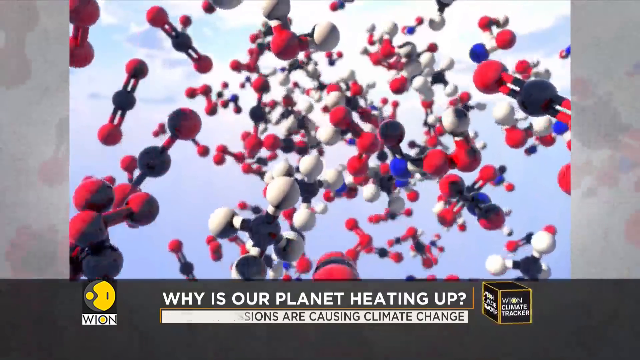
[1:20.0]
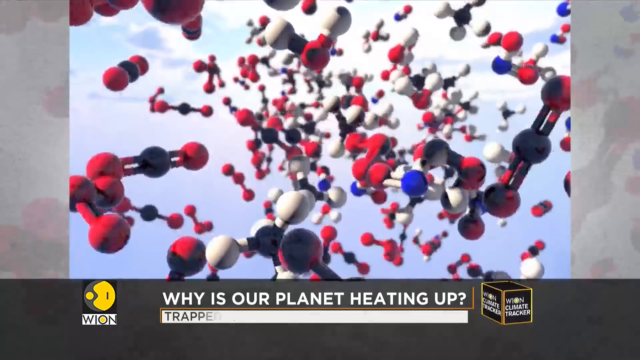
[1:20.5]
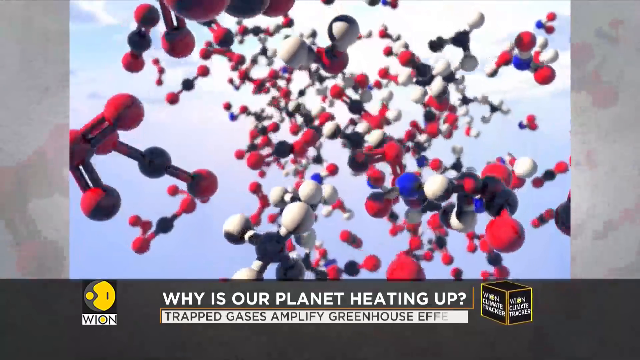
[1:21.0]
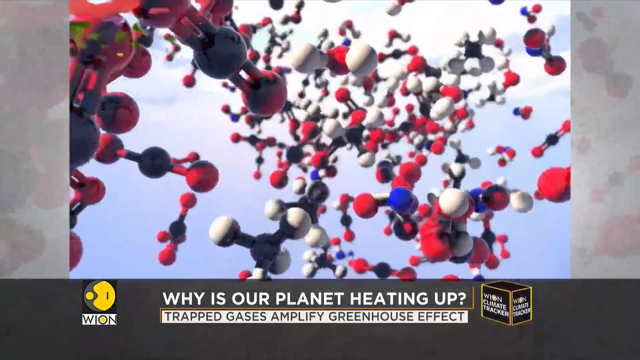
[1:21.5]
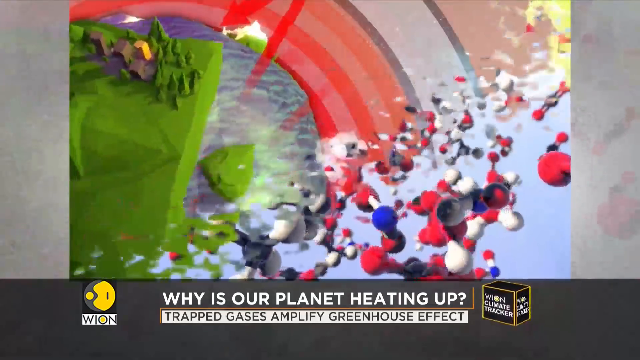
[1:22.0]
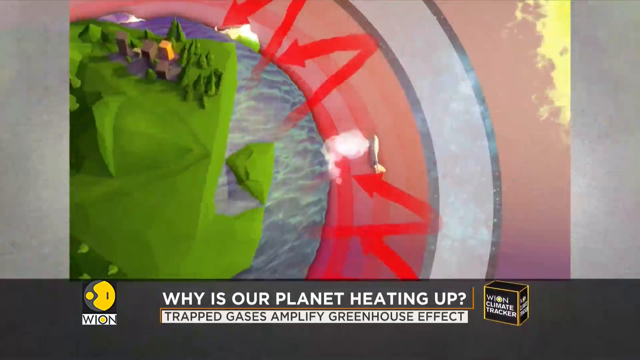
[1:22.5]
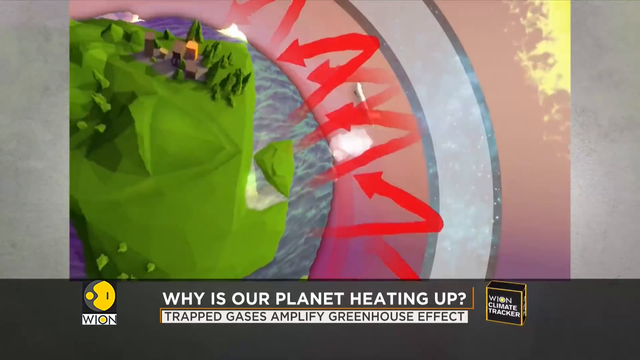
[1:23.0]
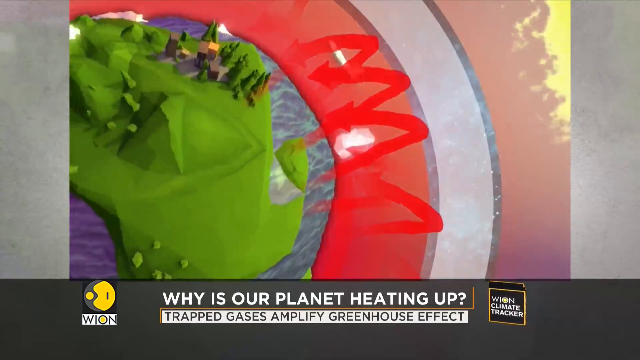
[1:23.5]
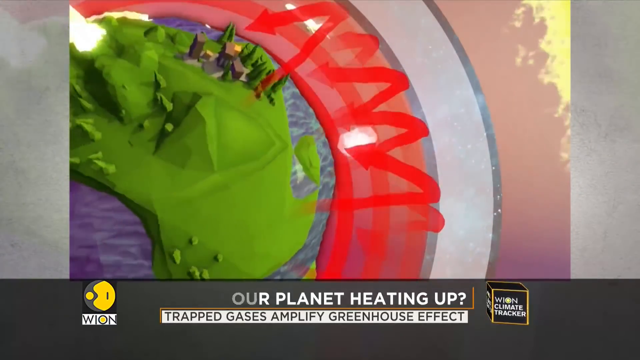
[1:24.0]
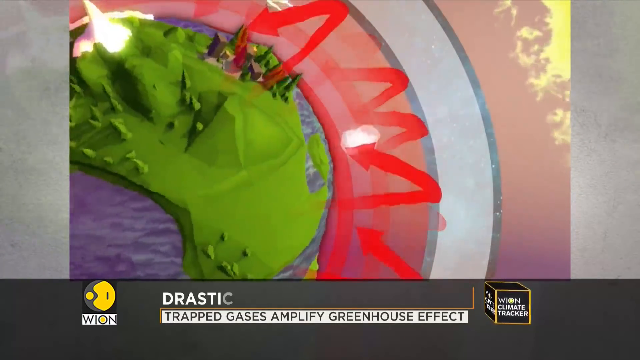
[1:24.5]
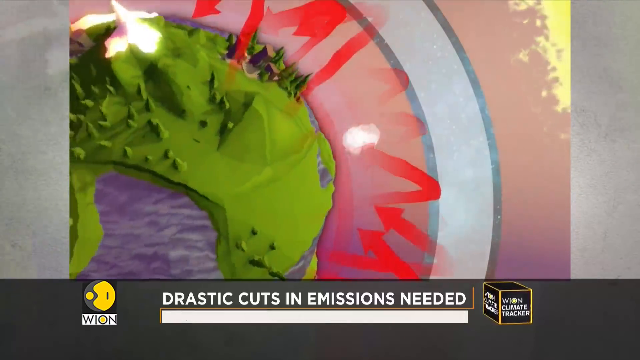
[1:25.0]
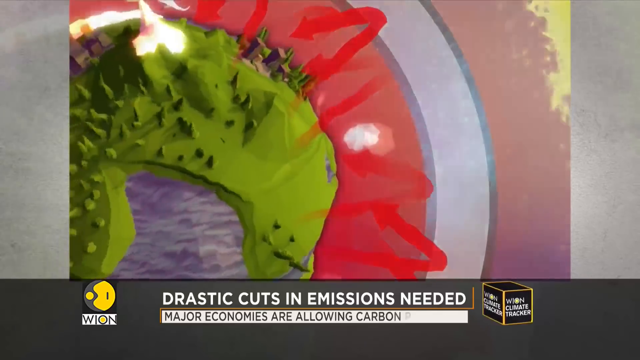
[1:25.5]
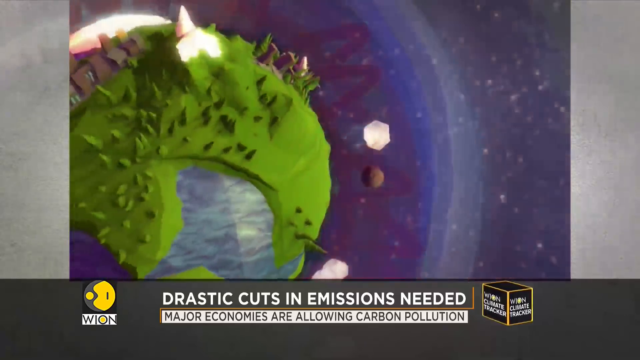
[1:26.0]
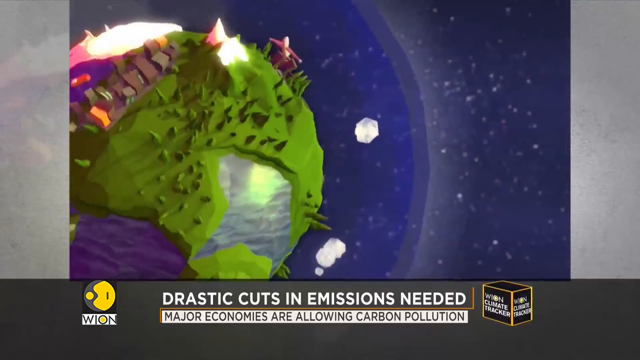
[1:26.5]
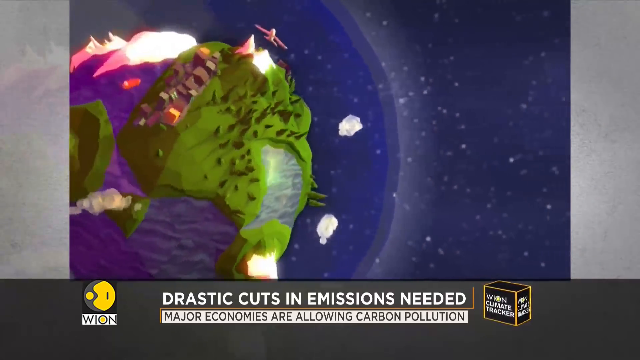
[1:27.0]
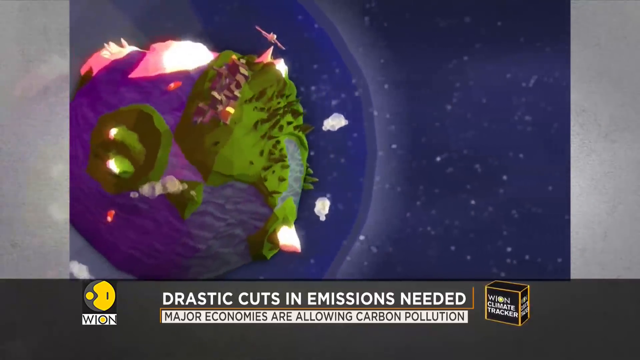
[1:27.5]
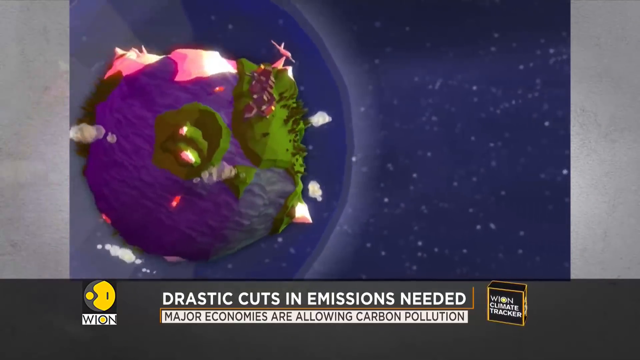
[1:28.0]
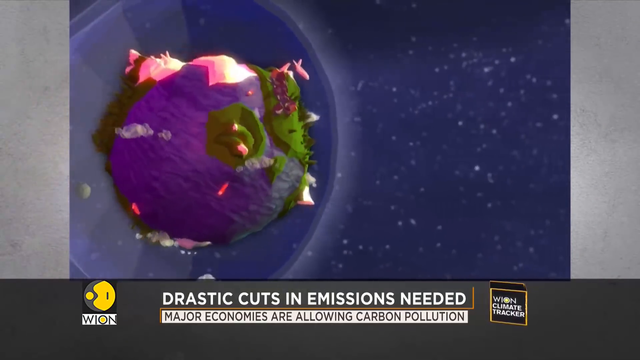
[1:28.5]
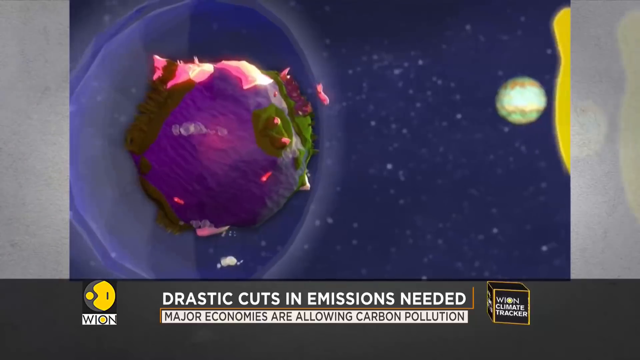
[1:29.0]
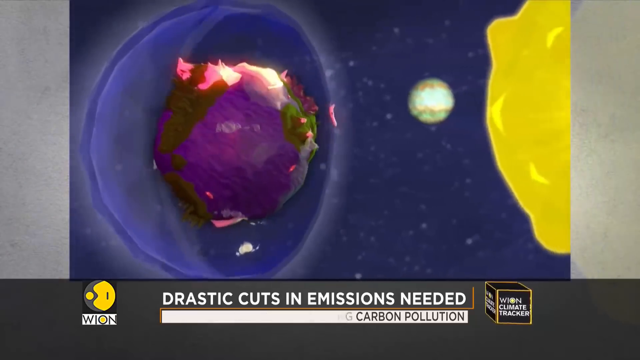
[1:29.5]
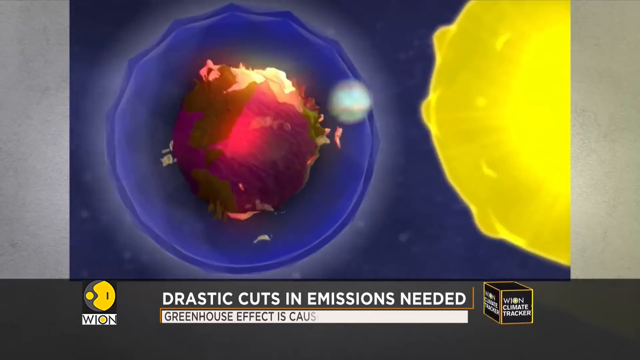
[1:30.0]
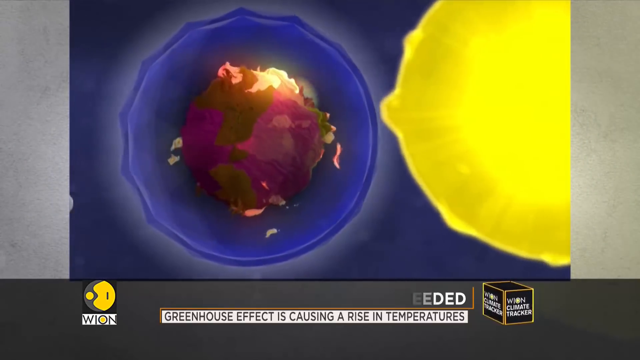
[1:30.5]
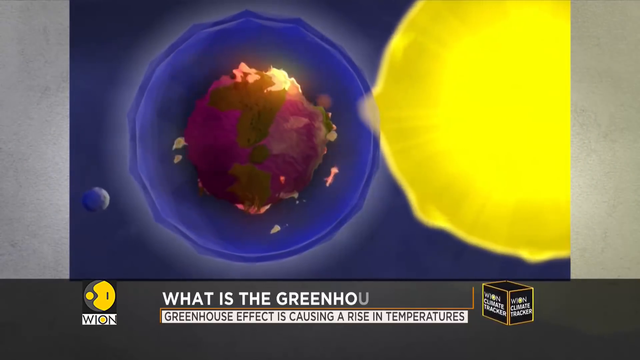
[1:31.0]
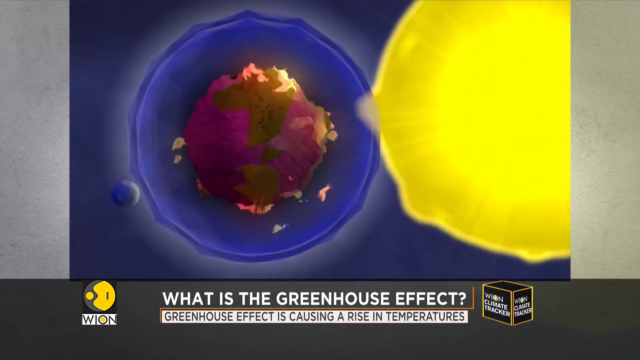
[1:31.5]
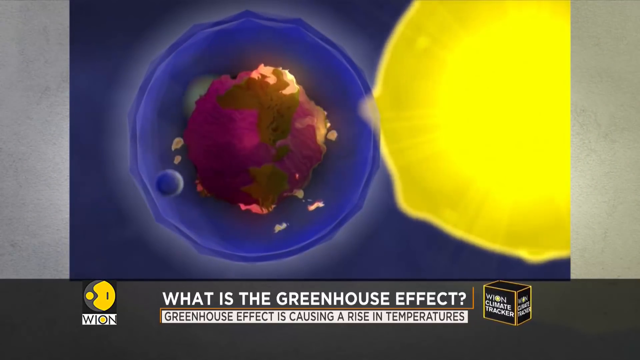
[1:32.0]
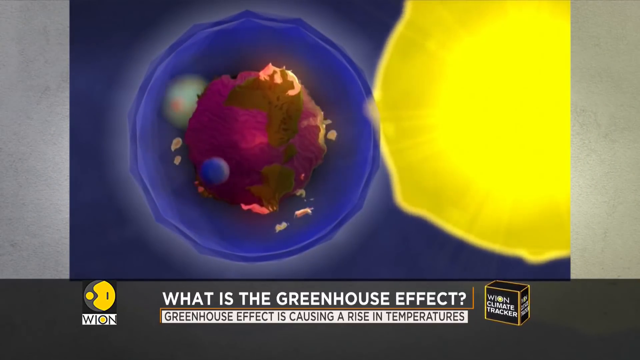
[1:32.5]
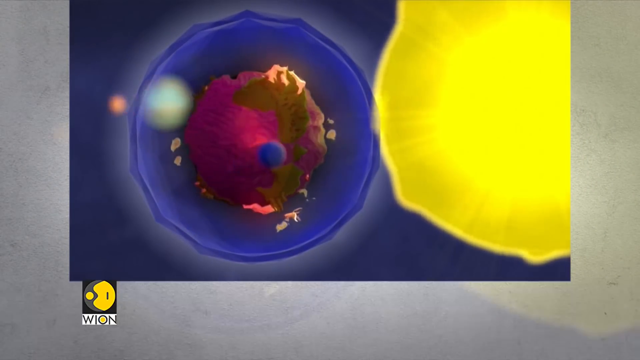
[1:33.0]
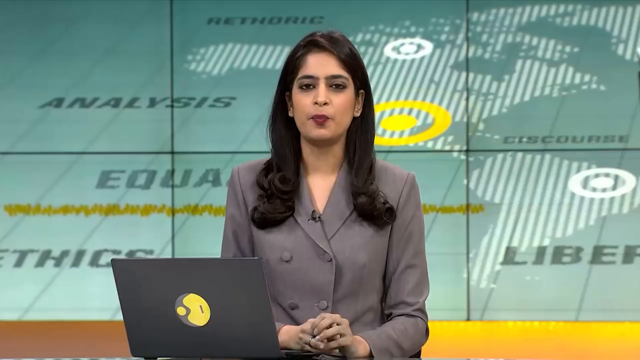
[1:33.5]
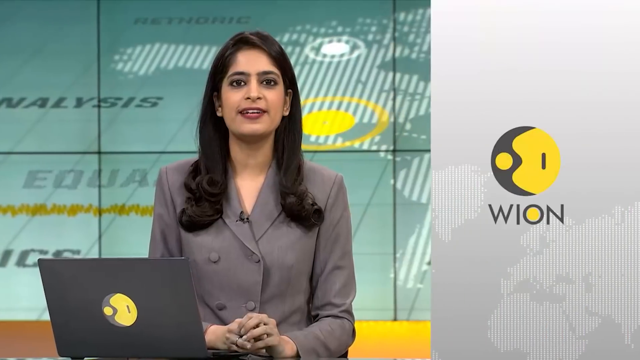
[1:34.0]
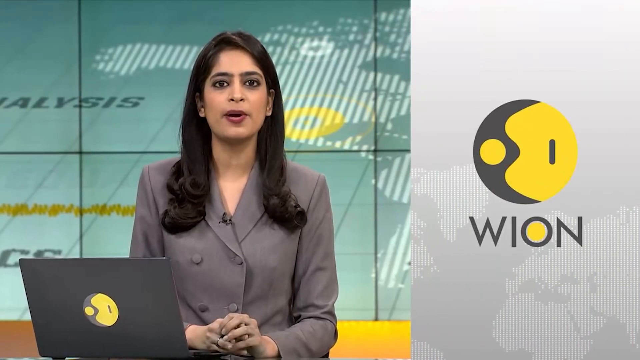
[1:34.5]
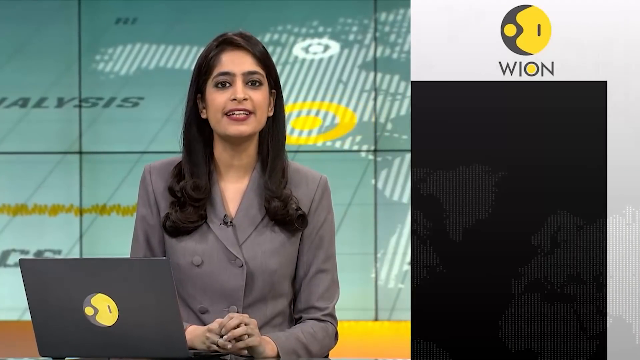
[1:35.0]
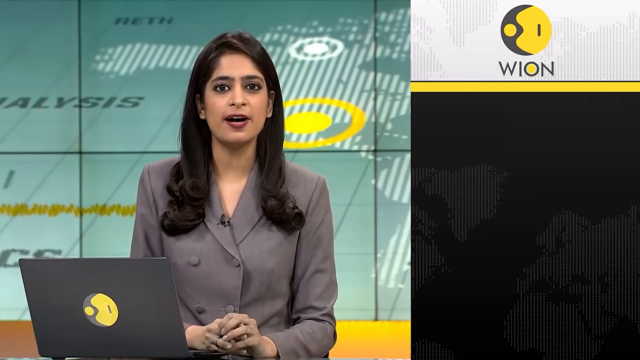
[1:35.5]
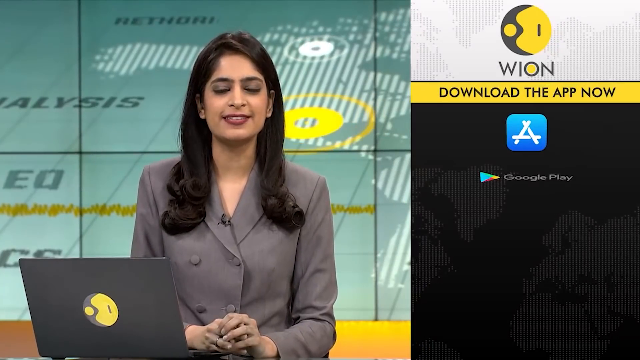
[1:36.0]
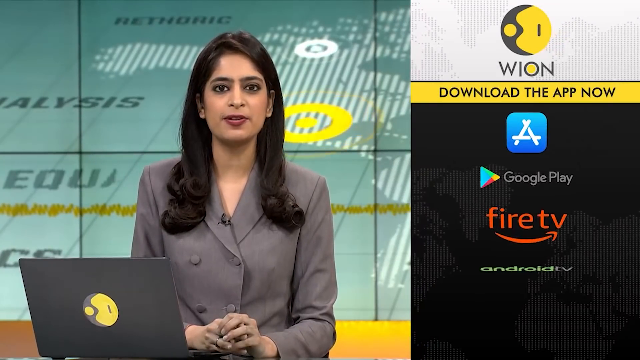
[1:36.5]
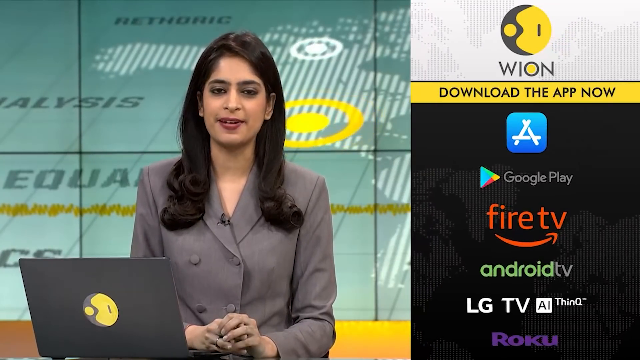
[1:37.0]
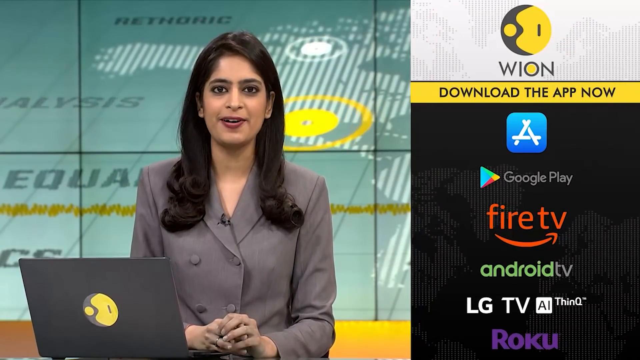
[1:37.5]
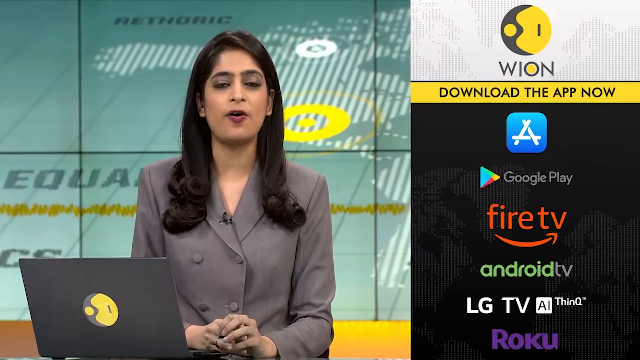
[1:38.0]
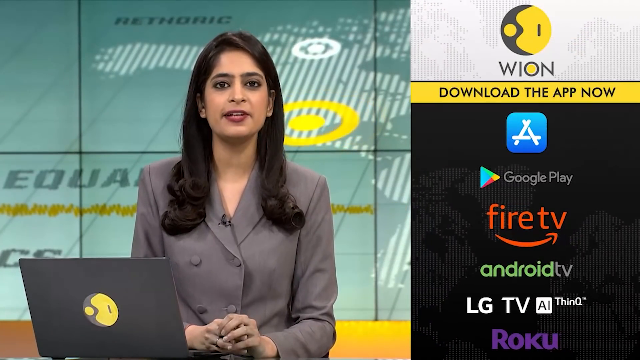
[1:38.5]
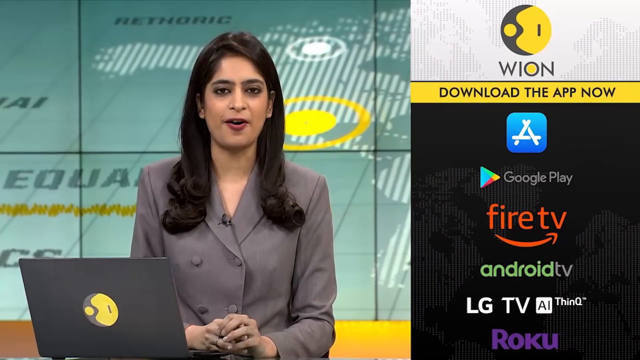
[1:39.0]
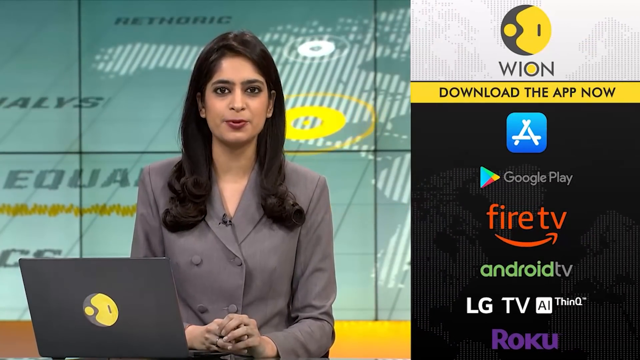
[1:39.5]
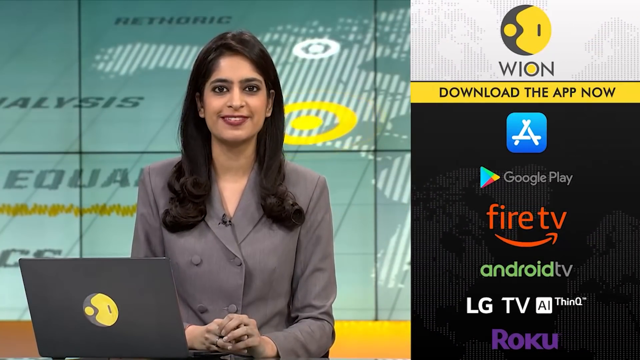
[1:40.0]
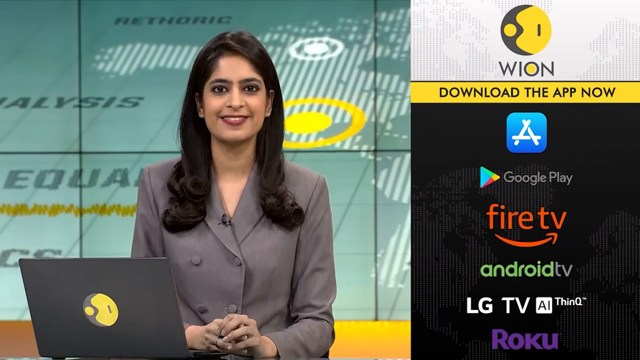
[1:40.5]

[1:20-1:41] The graphic at the bottom of the screen reads "why our planet is heating up," "trapped gases amplify greenhouse effects," "major economies are allowing the carbon pollution," and "drastic cuts in emissions are needed." A depiction of the Earth and the atmosphere outside of it shows greenhouse gases being trapped on Earth. There are also depictions of a bunch of molecules, and the Earth is shown spinning around; it looks like it is getting closer to the sun and is being heated up by the sun. Toward the end, the newscaster is visible, talking on screen. At the very end, several different sponsors are shown, and several logos to the right read "download the app now" from the Apple App Store, Google Play, Fire TV, Android TV, and LG TV AI ThinQ.